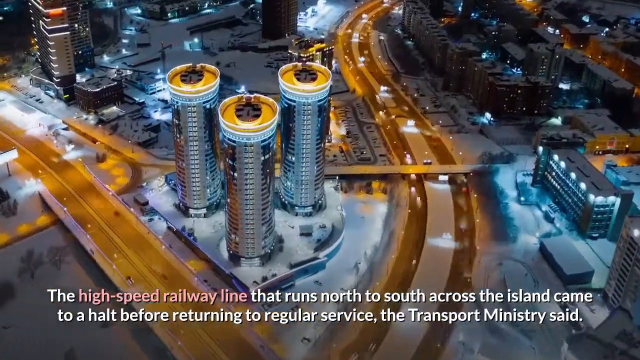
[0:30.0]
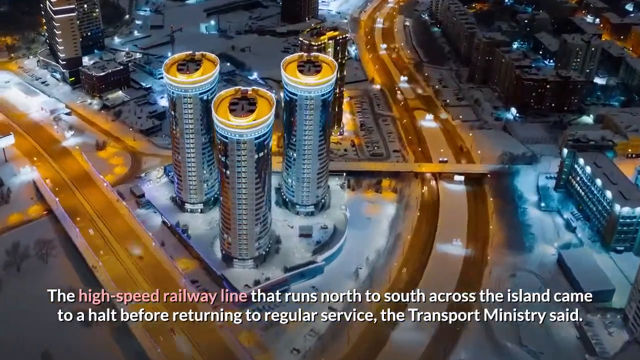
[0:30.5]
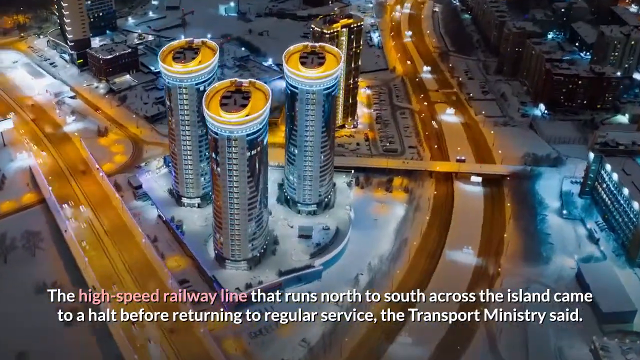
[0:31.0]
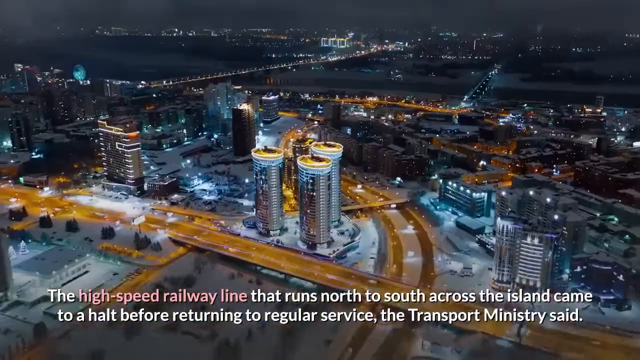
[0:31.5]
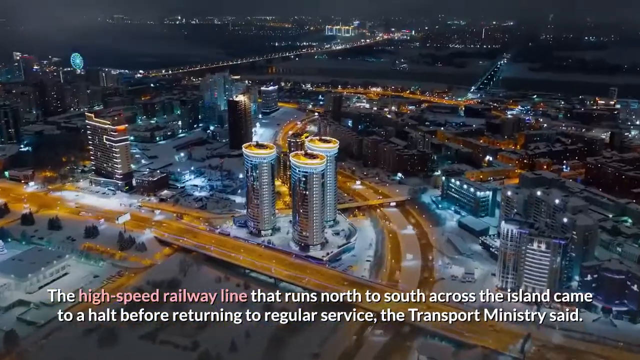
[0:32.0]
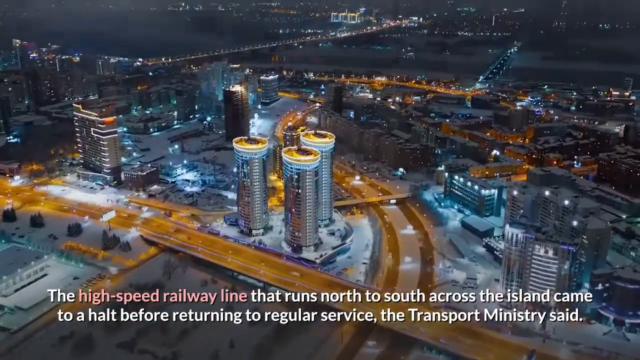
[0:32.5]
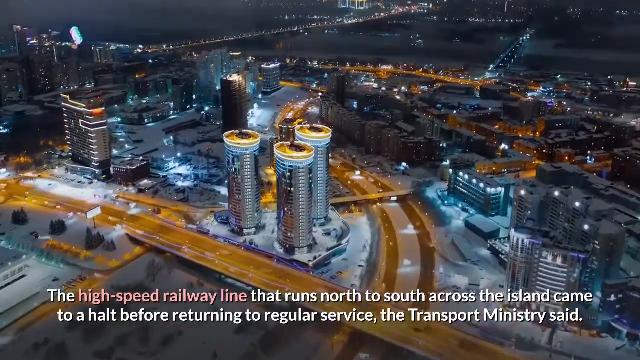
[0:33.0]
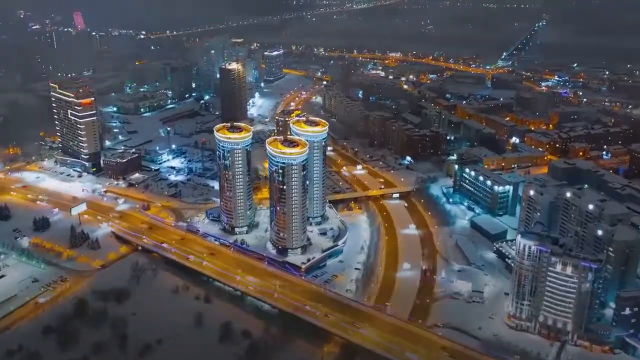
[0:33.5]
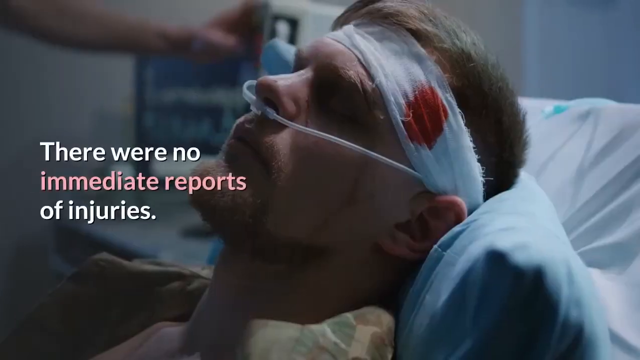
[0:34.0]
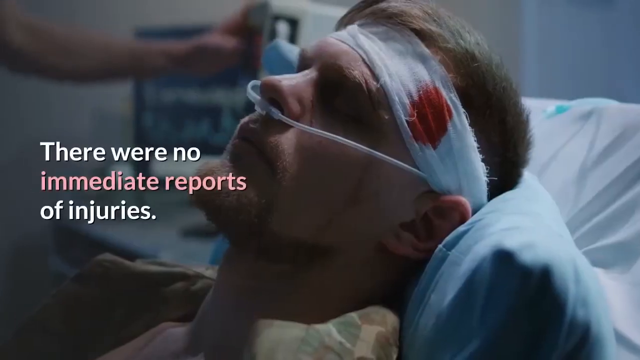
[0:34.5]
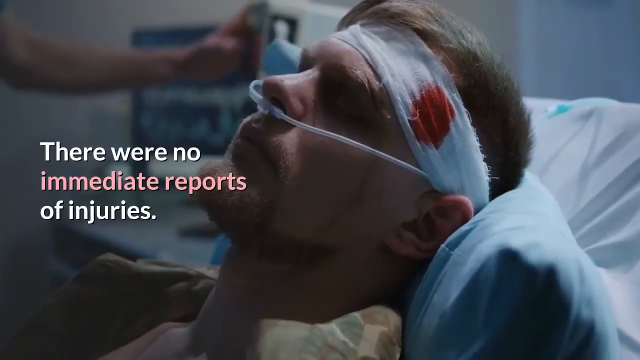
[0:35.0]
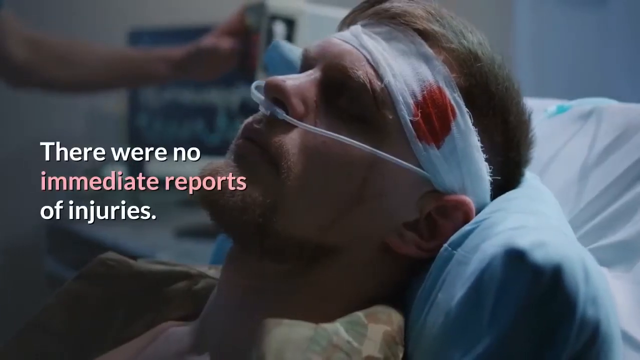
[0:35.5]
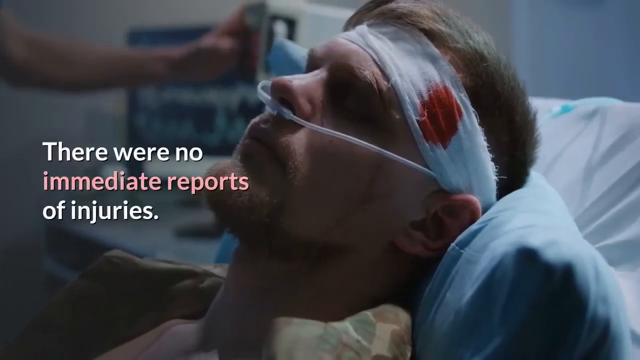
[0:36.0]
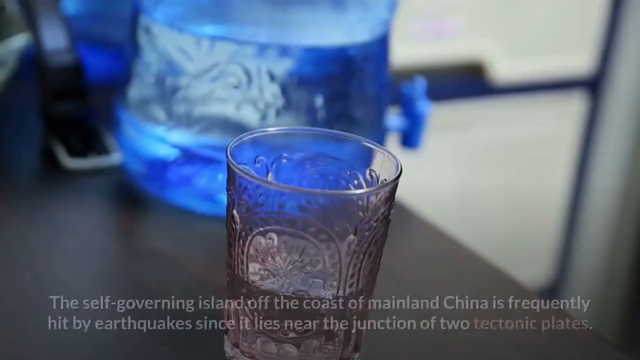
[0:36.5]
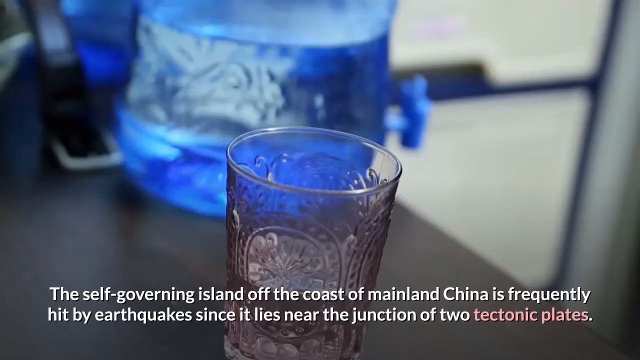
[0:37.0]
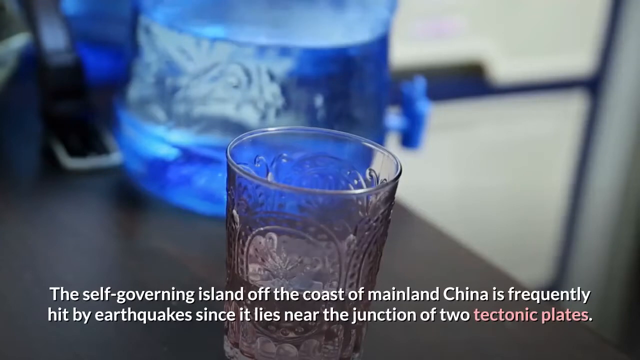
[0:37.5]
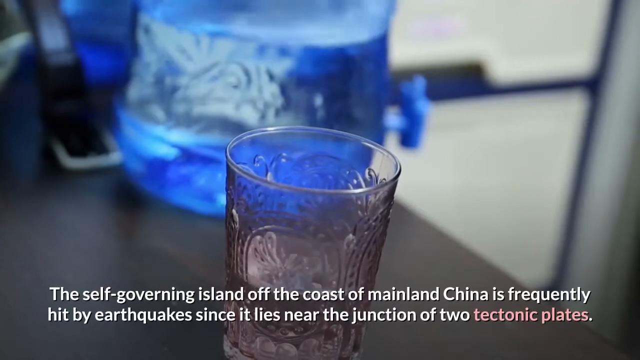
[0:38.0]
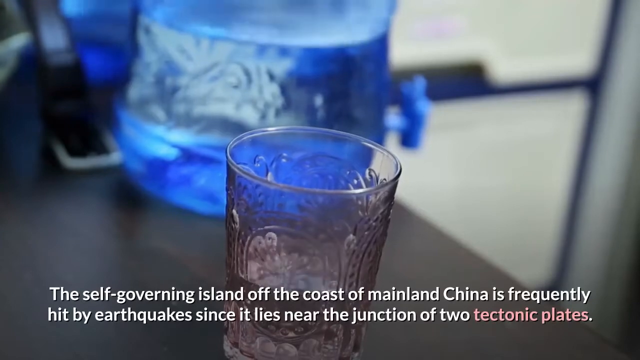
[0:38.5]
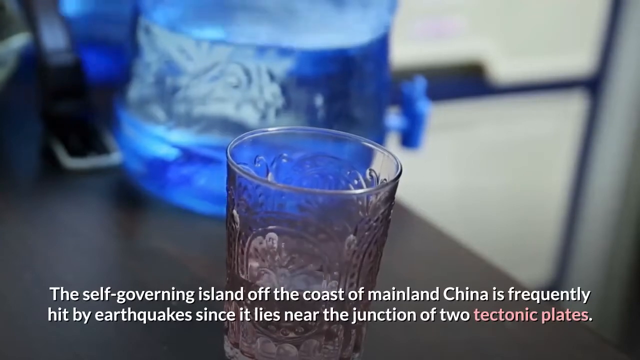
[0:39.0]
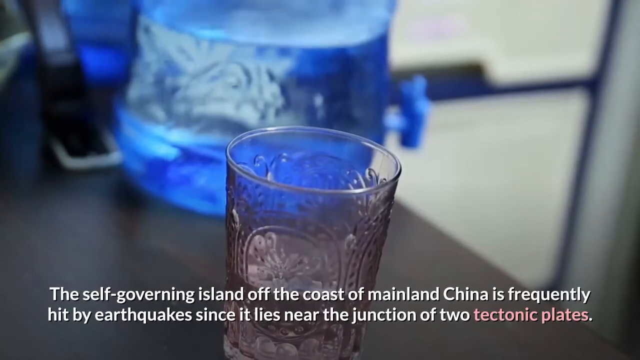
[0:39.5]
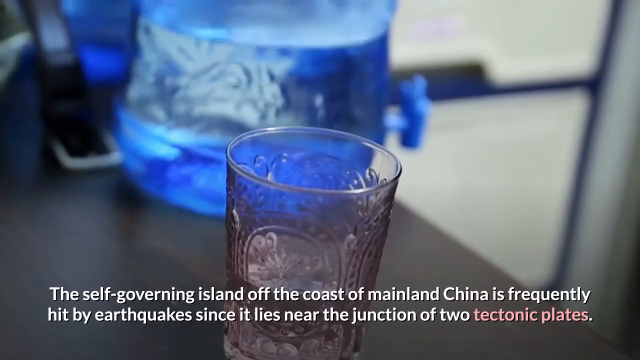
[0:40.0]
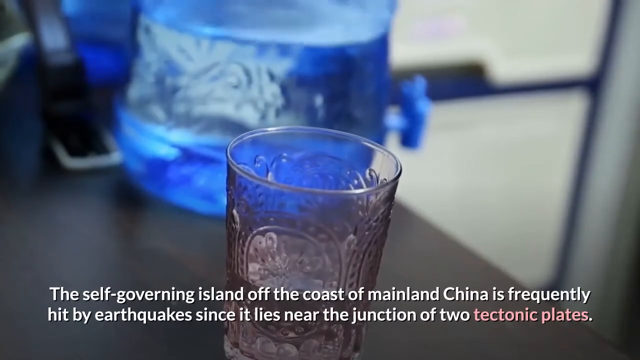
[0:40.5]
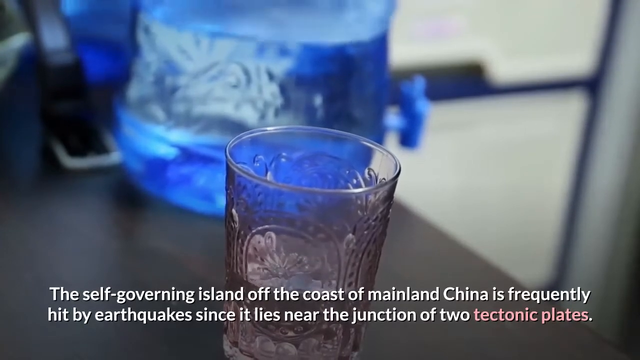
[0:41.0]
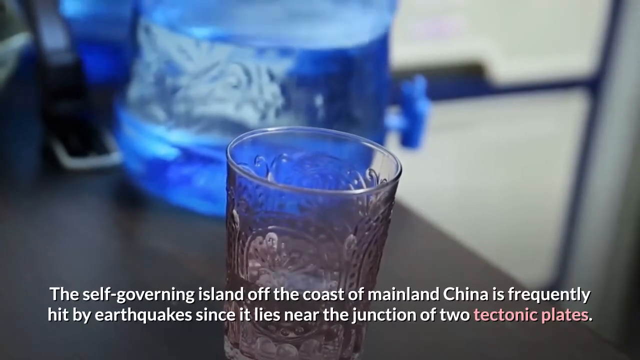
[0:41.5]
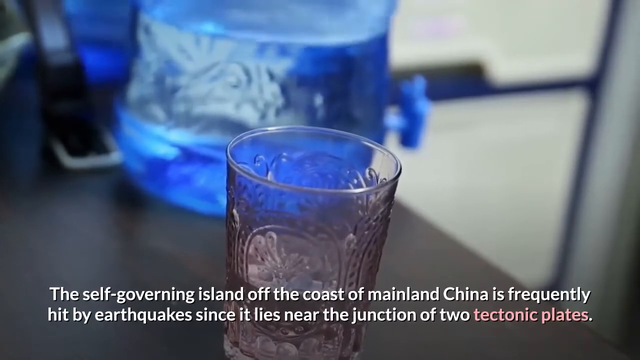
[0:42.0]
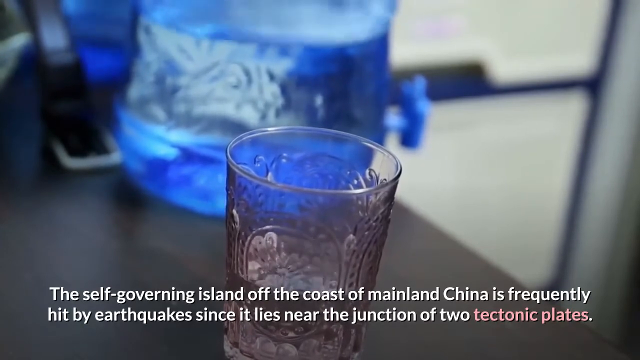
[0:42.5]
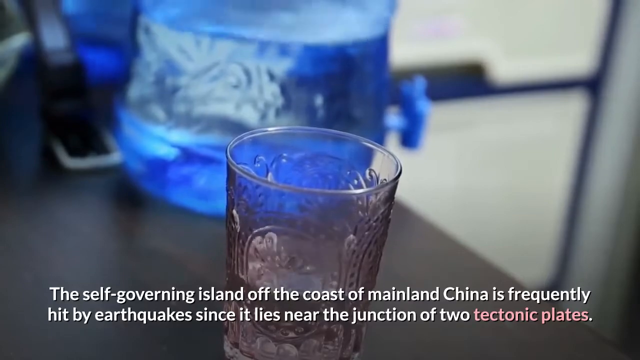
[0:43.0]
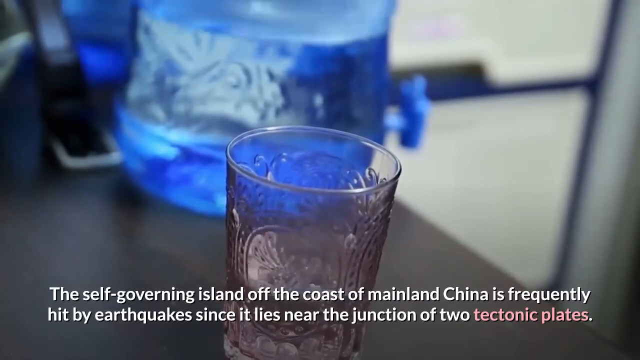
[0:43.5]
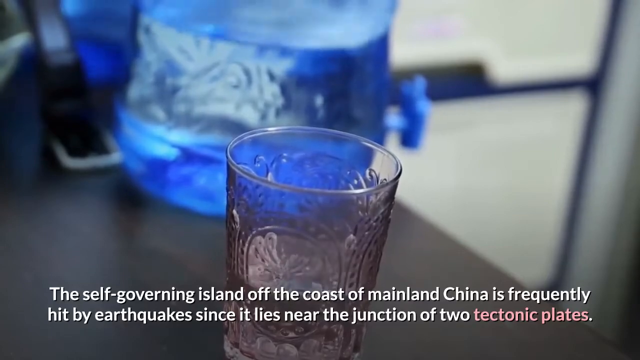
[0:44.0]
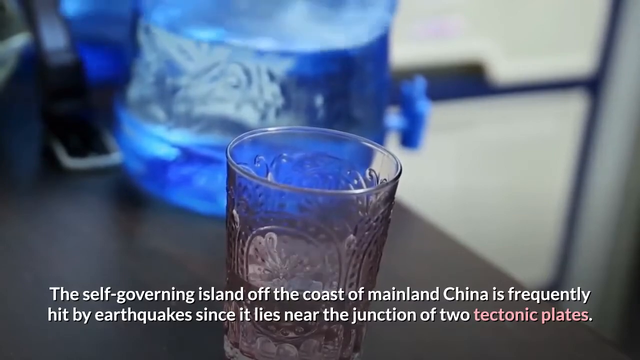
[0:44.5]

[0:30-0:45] The city continues to be shown from an aerial point of view. A man appears to be in a hospital, possibly with serious head injuries; he is lying on hospital sheets with a drip around his face and head. A statement reads: "there were no immediate reports of injuries." Glasses with water are shown. A statement then appears: "the self-governing island off the coast of mainland China is frequently hit by earthquakes since it lies near the junction of two tectonic plates."